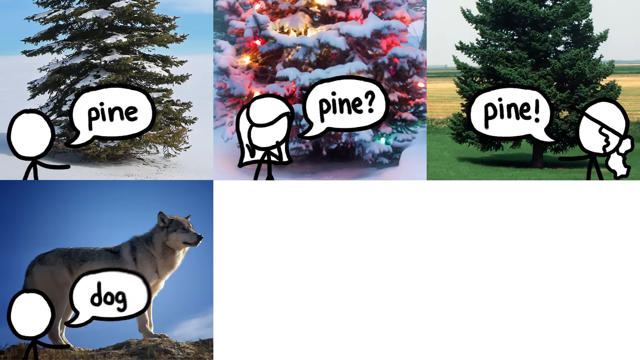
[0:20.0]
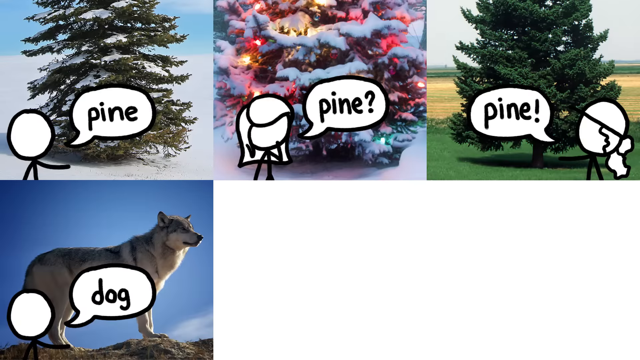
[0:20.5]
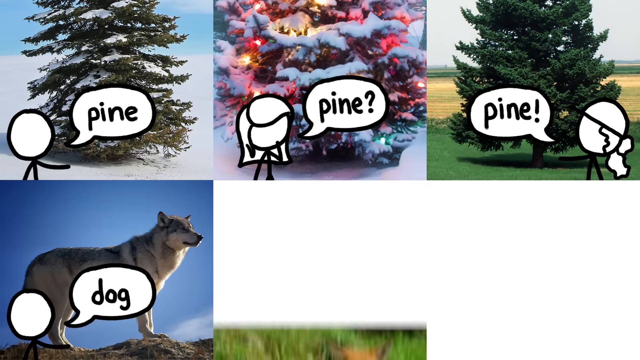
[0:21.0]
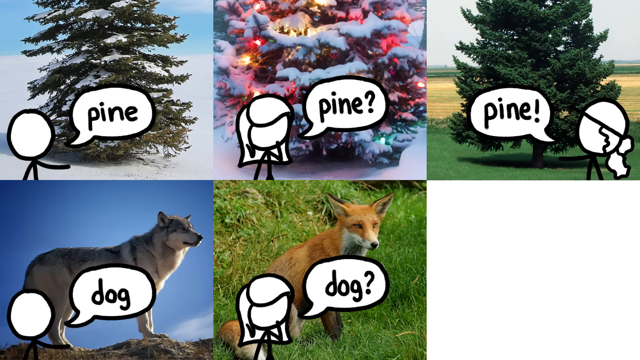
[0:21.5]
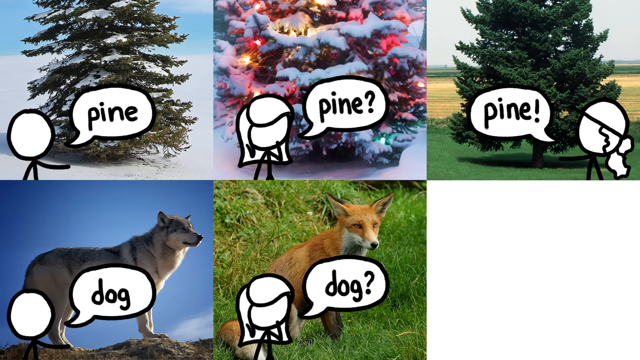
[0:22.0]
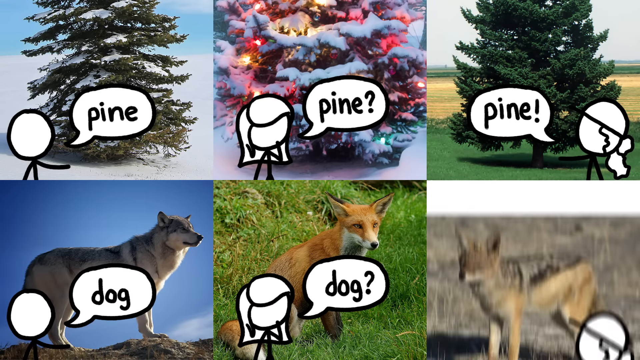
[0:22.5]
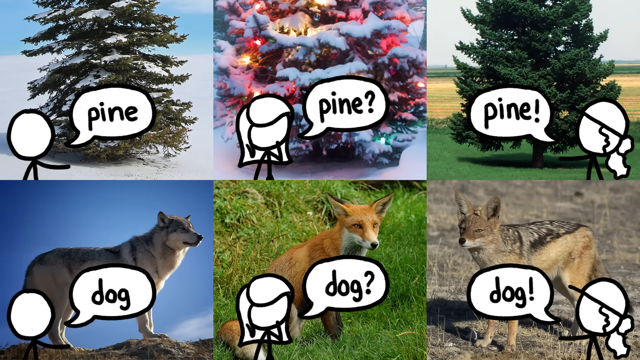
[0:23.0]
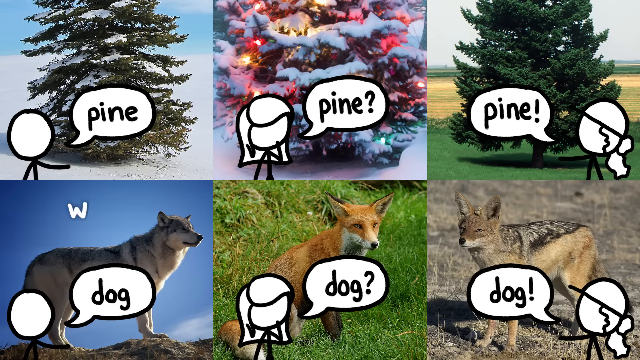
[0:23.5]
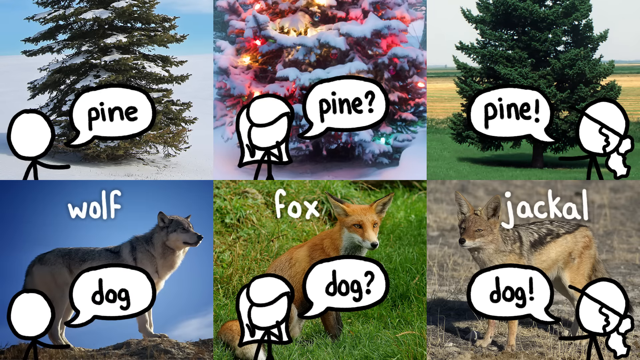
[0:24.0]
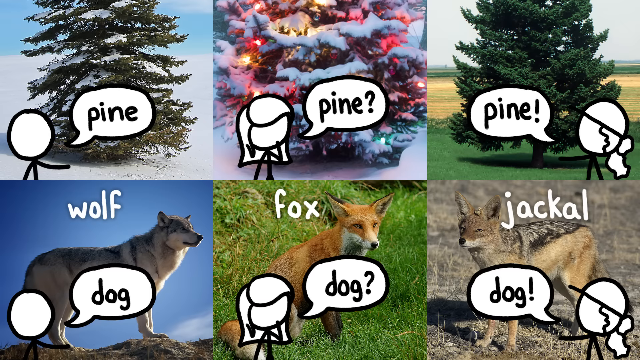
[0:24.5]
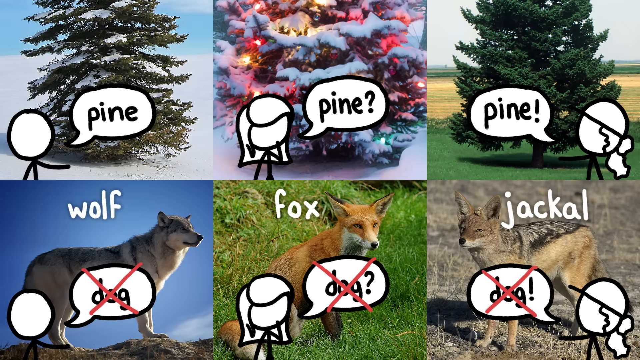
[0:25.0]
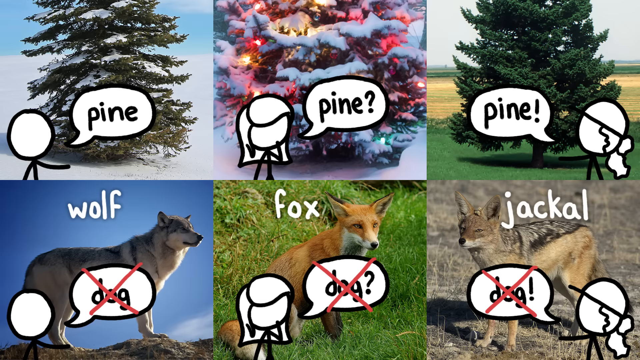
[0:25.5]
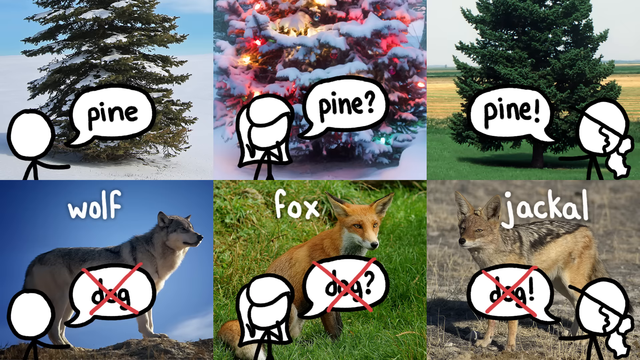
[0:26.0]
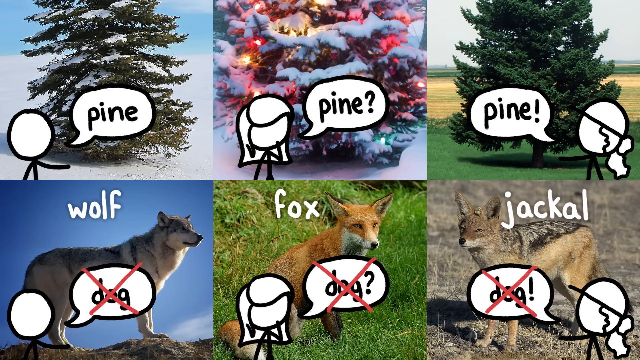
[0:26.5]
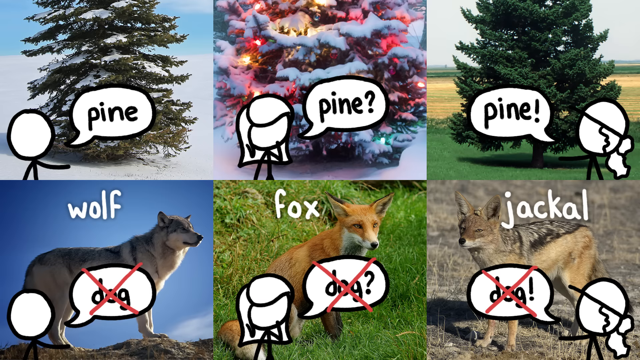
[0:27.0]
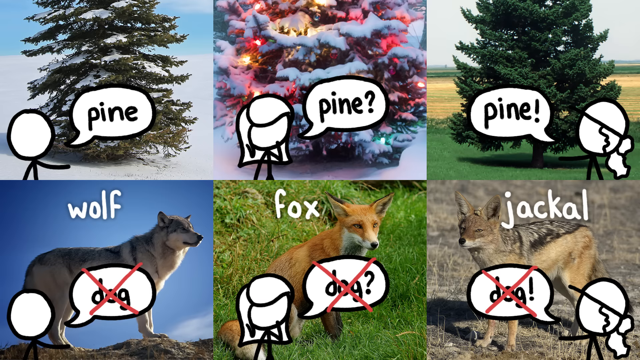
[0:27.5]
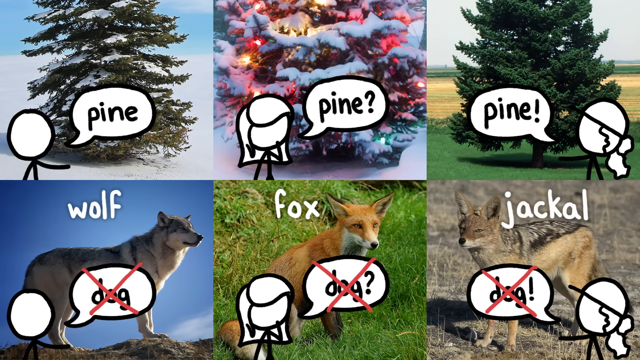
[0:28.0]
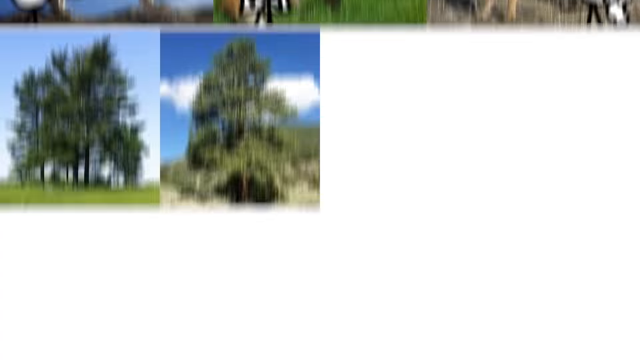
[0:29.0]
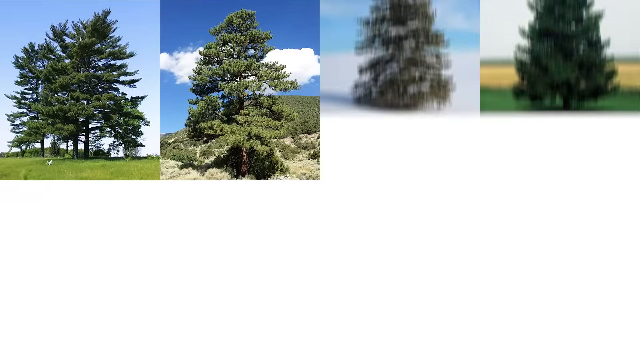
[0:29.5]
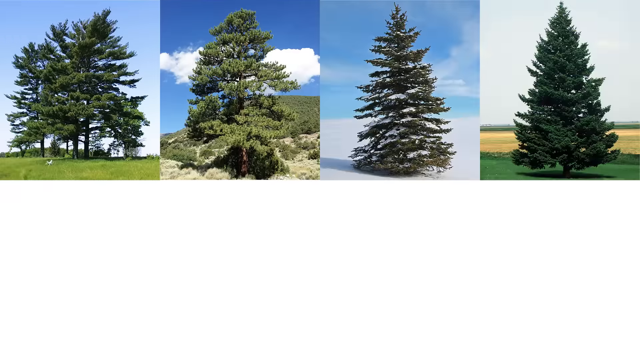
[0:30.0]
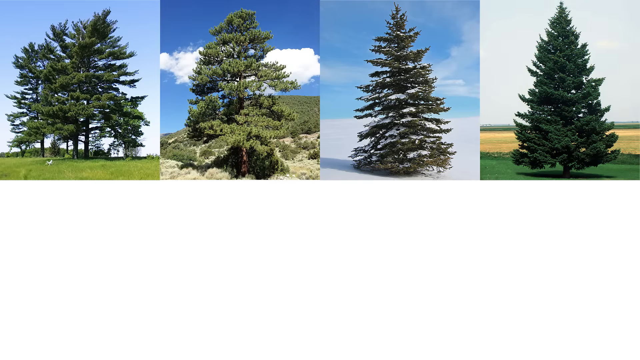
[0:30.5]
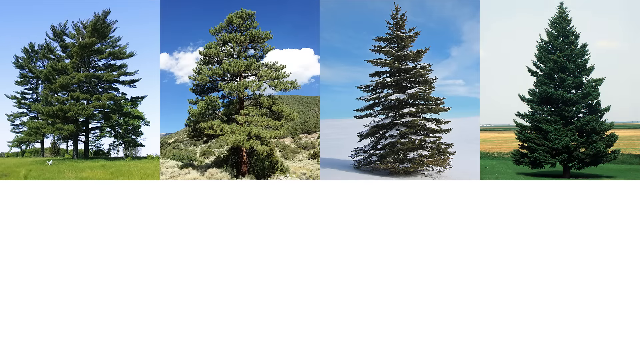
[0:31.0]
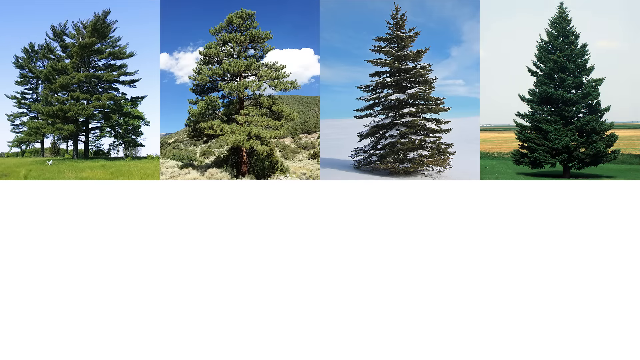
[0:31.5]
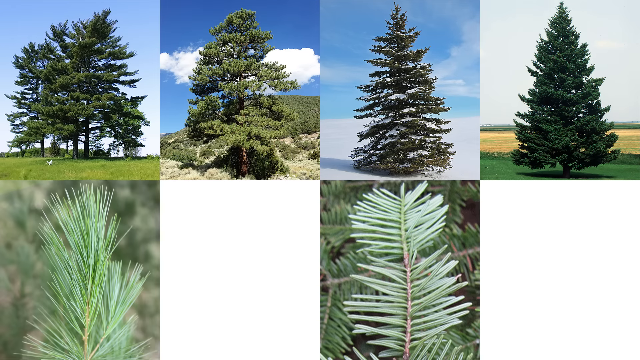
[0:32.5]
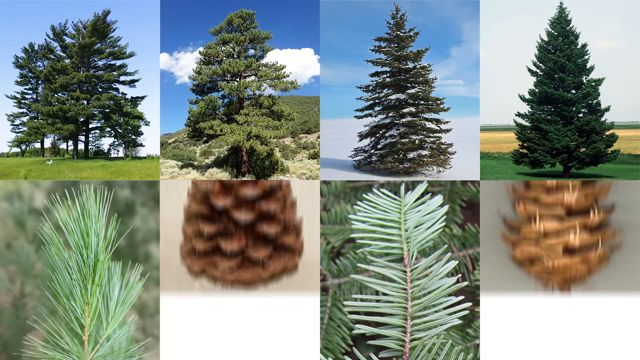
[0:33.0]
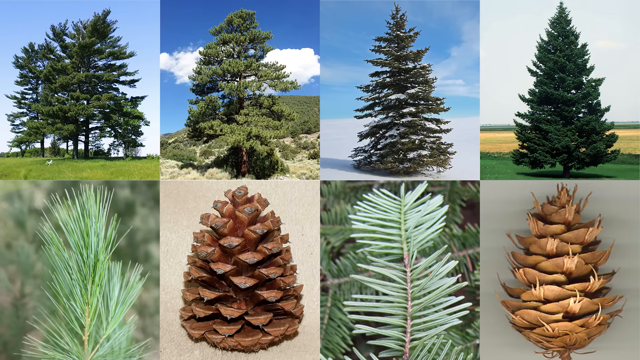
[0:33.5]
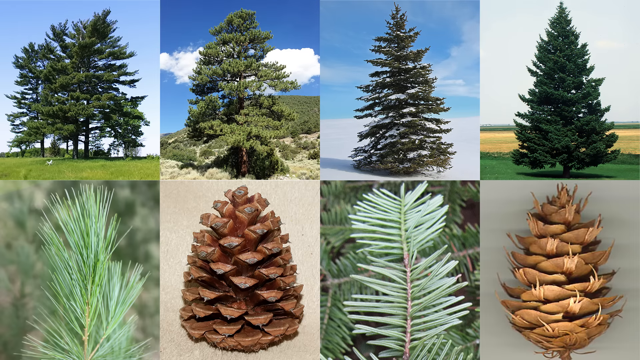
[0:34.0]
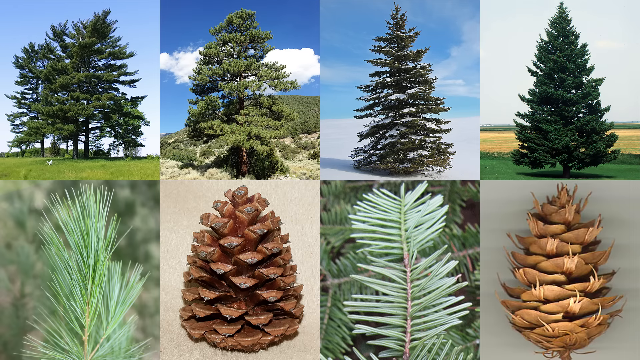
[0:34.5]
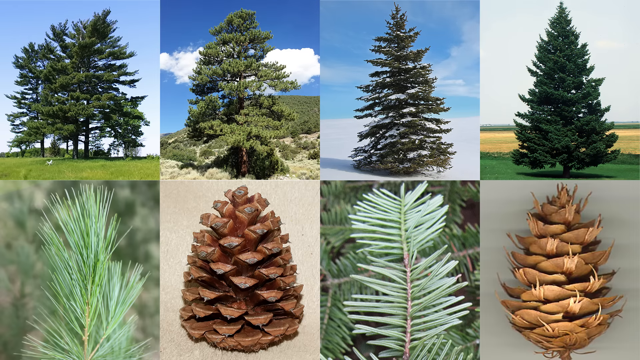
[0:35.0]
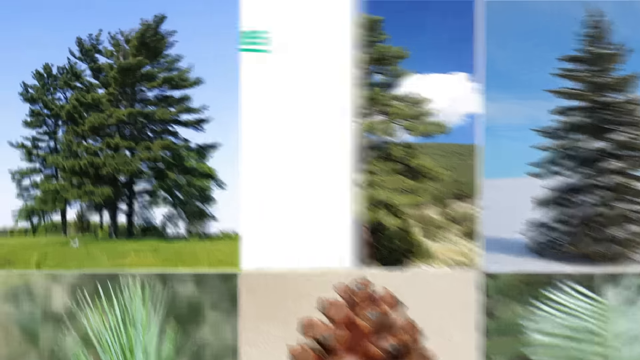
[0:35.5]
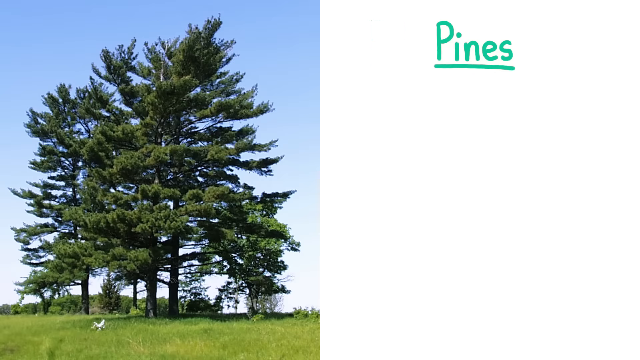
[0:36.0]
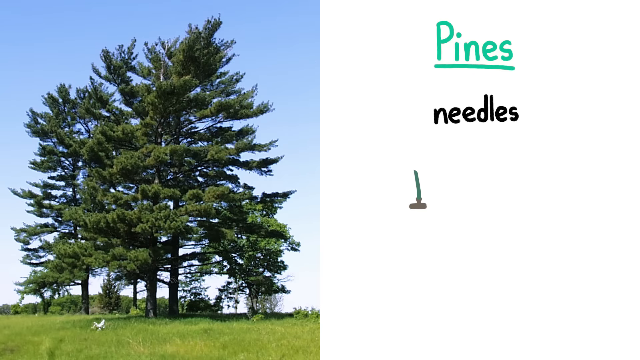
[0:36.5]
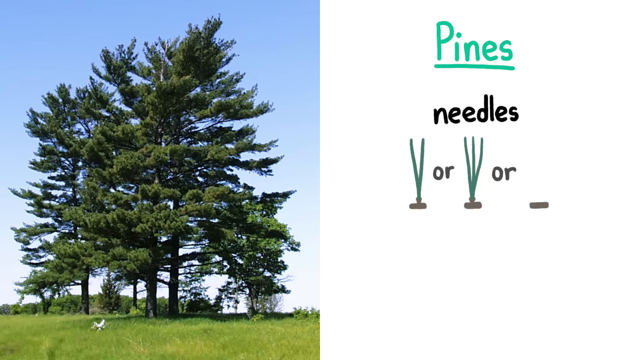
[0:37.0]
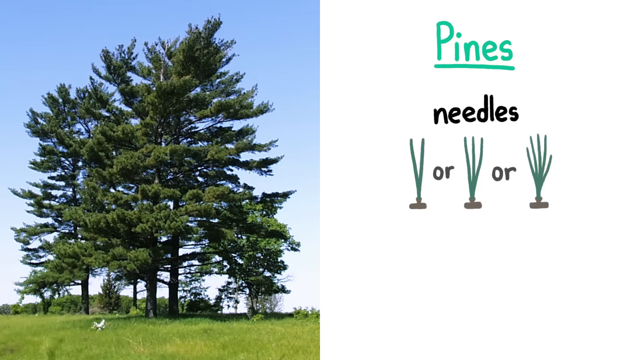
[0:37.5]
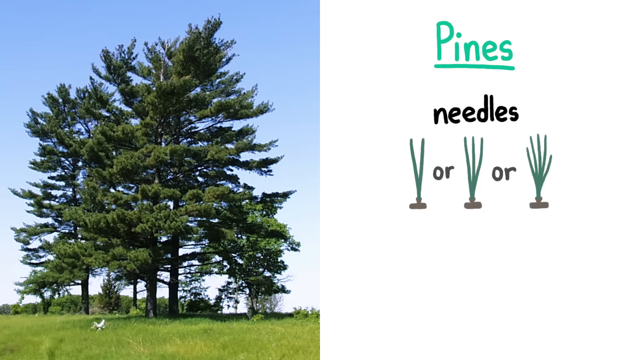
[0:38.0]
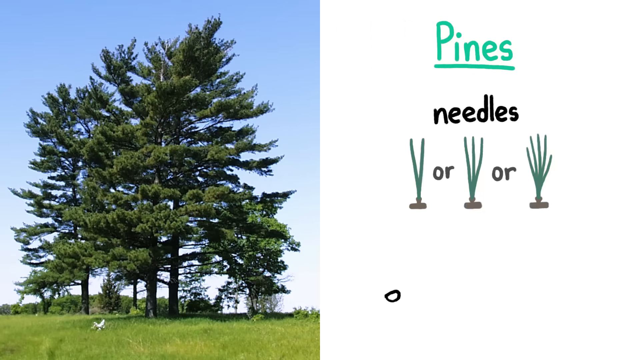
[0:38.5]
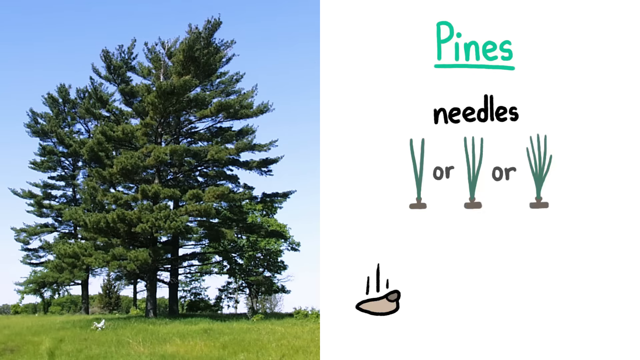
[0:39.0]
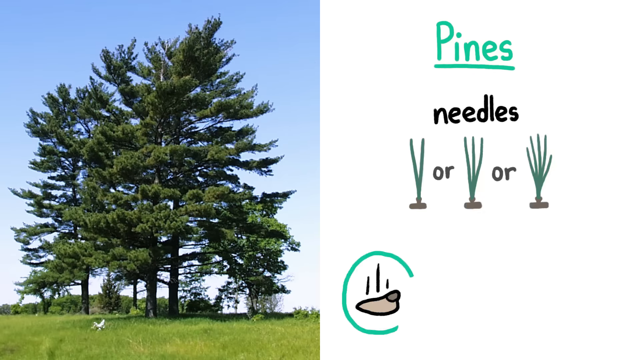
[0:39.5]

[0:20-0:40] The screen is divided into four pictures, with a solid white block as wide as two pictures in the bottom right corner. In the top left picture, a faceless stick man has a speech bubble saying "pine", with a pine or cedar tree with a little snow on it behind him. Next, a faceless figure of a girl has a bubble saying "pine?" with a Christmas tree behind her. In the last picture on the top row, a stick figure of a girl wearing a hard hat has a bubble saying "pine!". On the bottom row, the head of a stick figure has a bubble saying "dog", with a wolf standing on a mountaintop behind it. The next picture appears, labeled "fox", with a stick figure of a girl and a bubble saying "dog?" with an X through it. The last one says "jackal" with "dog!" crossed out with an X.